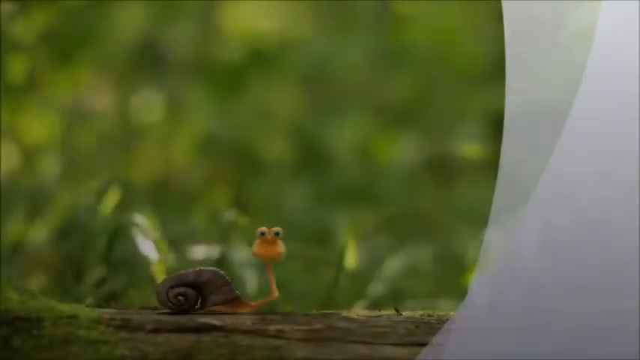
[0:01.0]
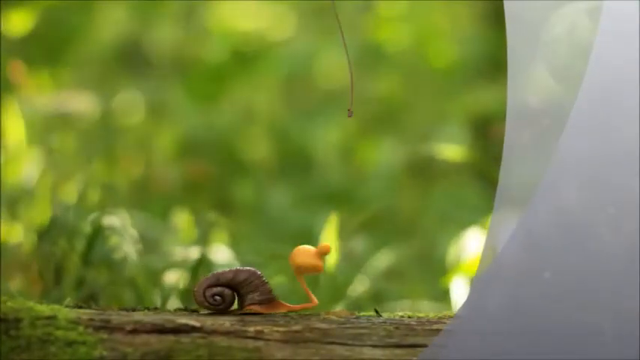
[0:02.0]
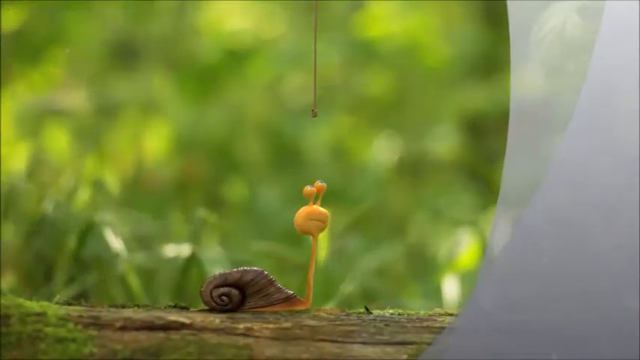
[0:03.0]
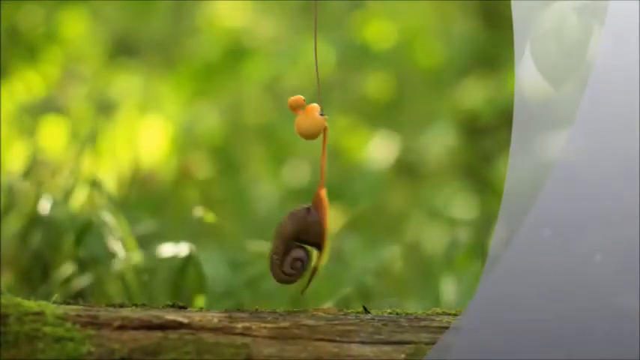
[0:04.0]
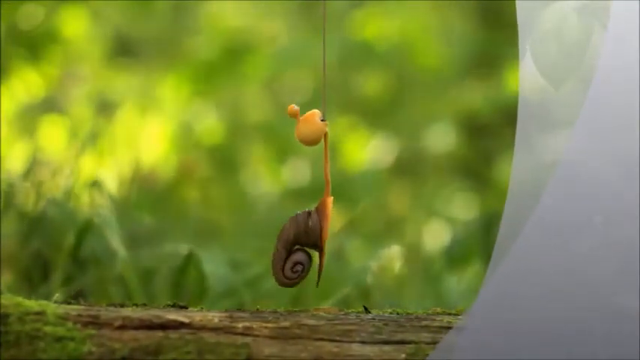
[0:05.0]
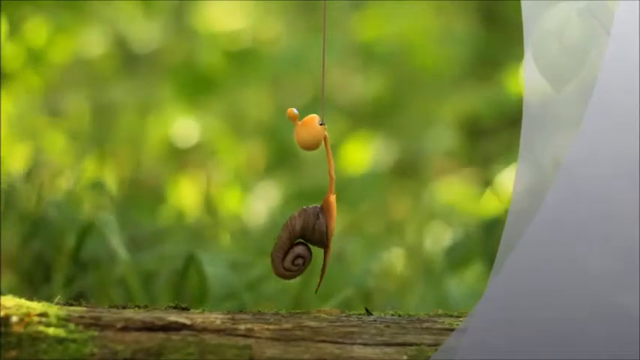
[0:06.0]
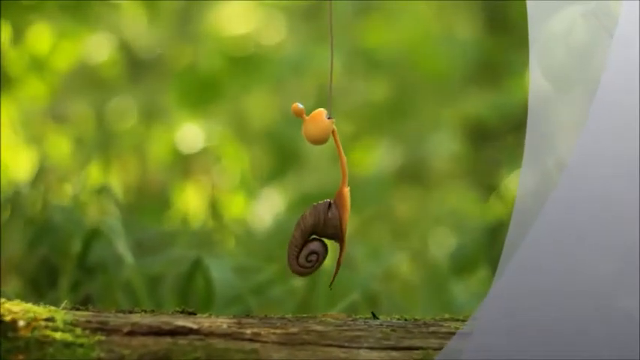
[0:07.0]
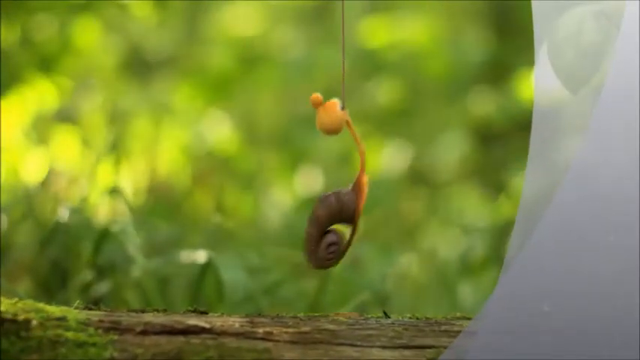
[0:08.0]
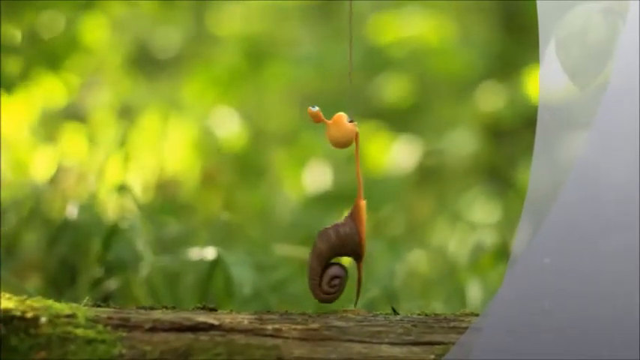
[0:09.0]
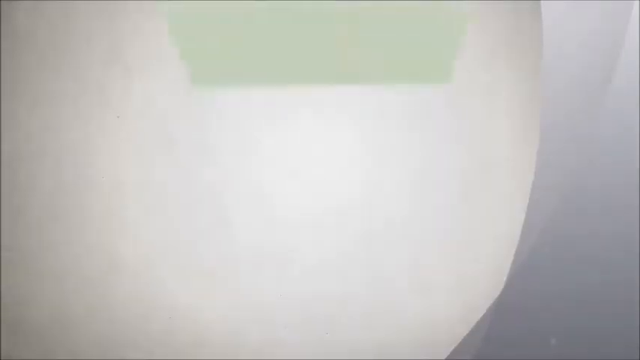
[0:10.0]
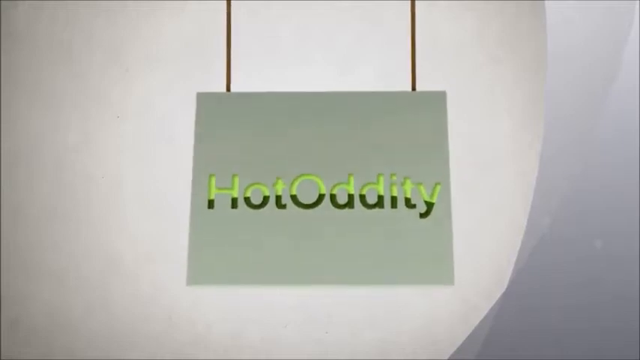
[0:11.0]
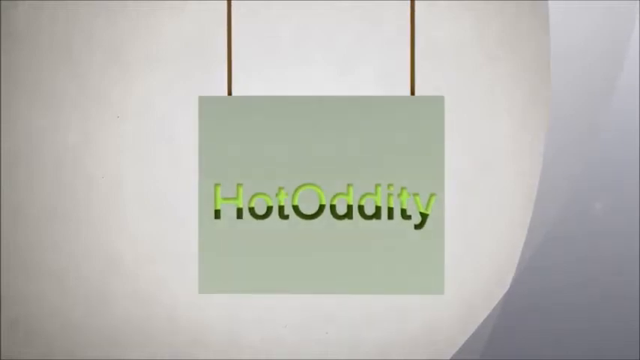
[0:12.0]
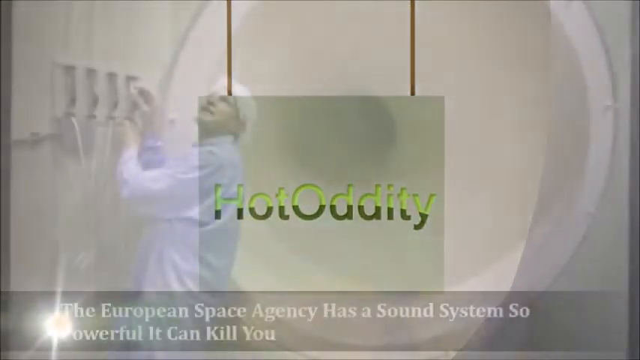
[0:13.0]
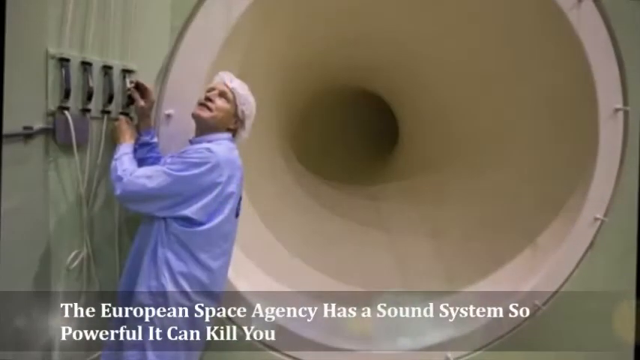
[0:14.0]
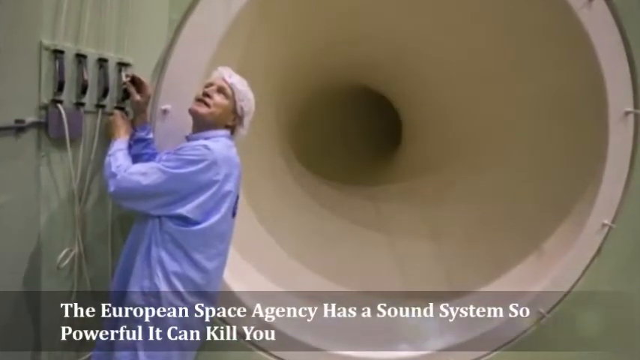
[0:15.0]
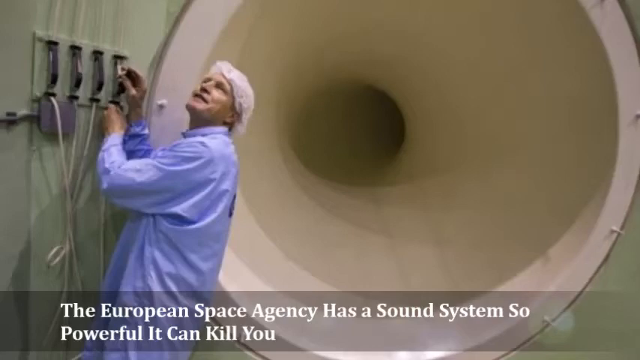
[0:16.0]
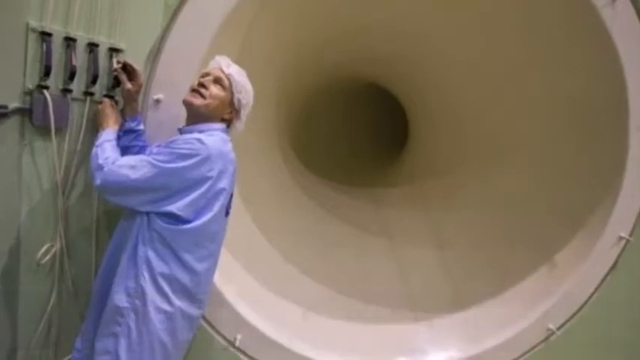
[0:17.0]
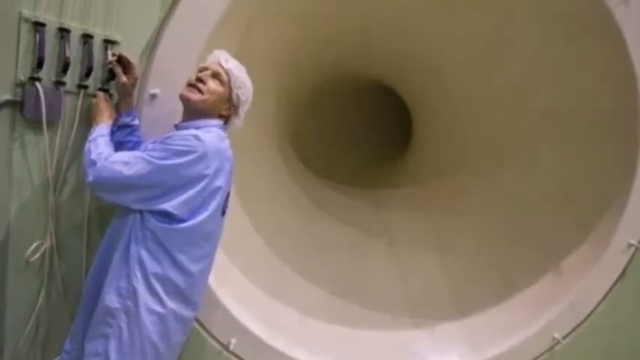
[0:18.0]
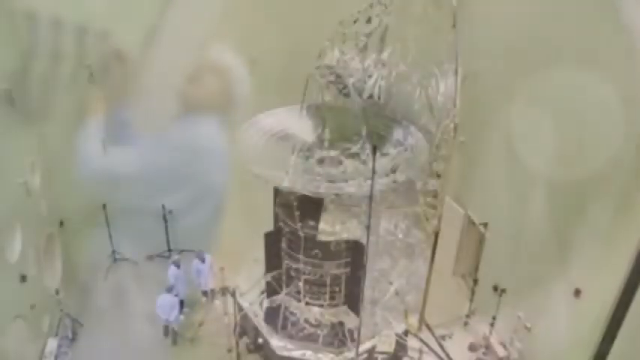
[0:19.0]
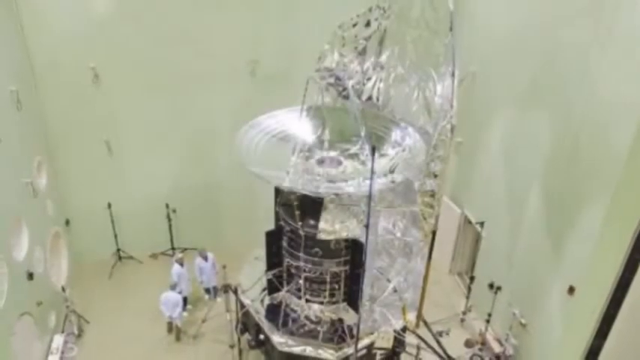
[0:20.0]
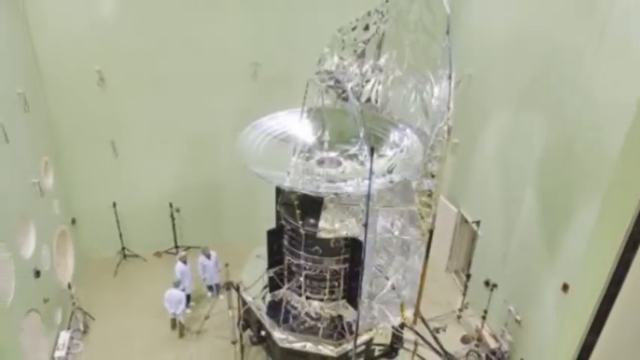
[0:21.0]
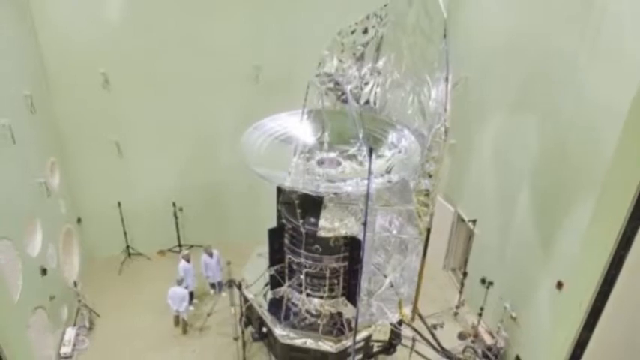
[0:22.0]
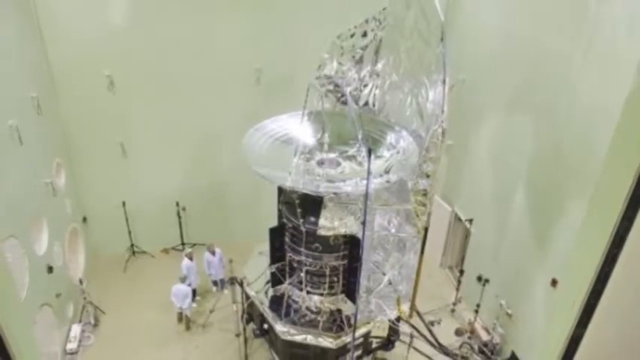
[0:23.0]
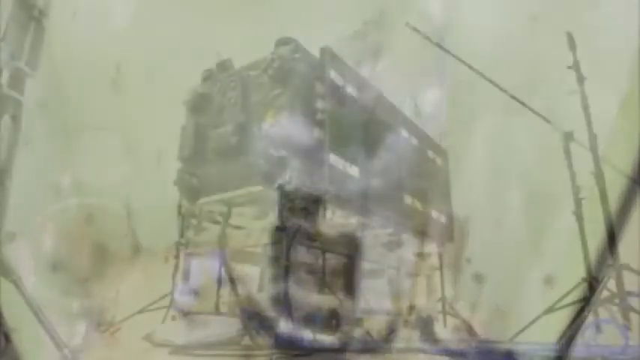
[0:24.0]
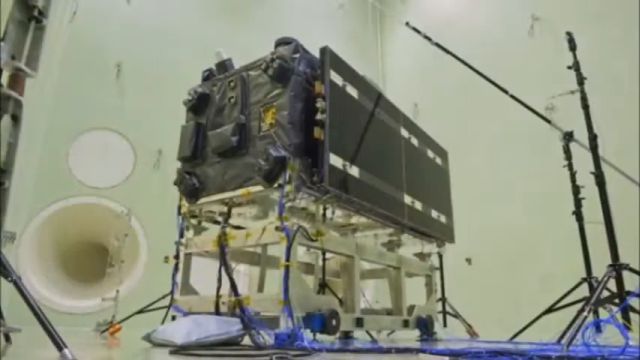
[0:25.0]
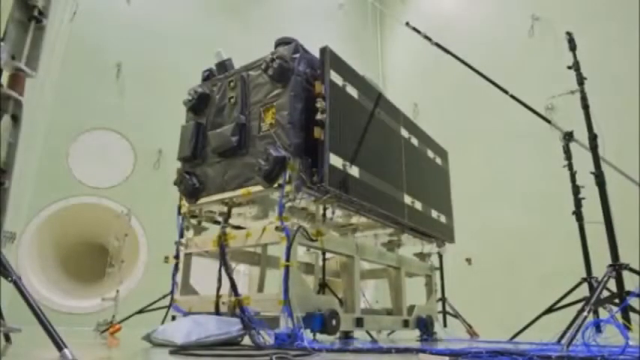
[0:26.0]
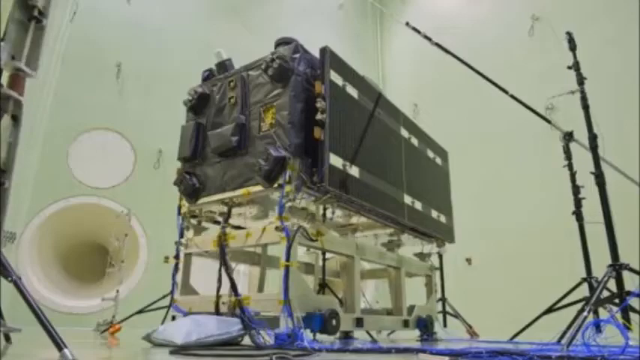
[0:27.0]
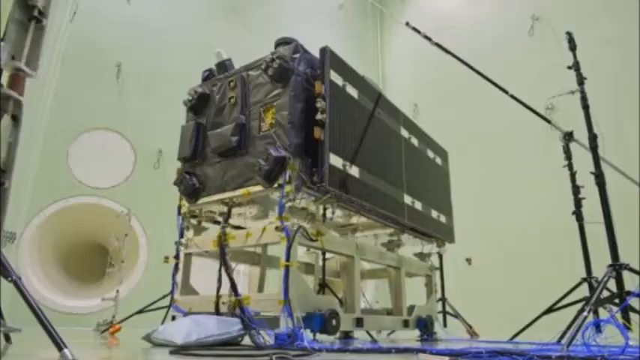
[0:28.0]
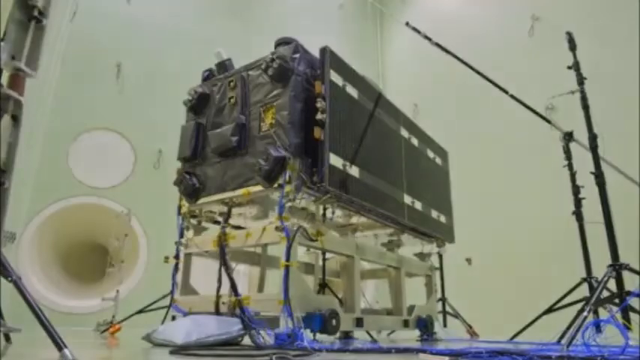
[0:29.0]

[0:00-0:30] The video opens with a cartoon of a yellow, cartoonized snail outdoors, with grass in the background. The snail is on what seems to be a tree branch. A string comes down, and the snail grabs onto it with its mouth and tries to climb up it with its mouth, then falls down. A sign comes down that says "hot toddy." Next, a person appears wearing something like a hairnet on his head and a blue shirt; he is doing something with some sort of switch. A picture of what looks like a glass-type thing appears, followed by a picture of something inside a building, possibly a place for producing something.